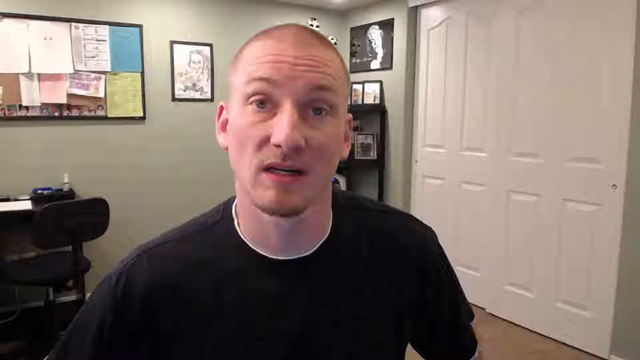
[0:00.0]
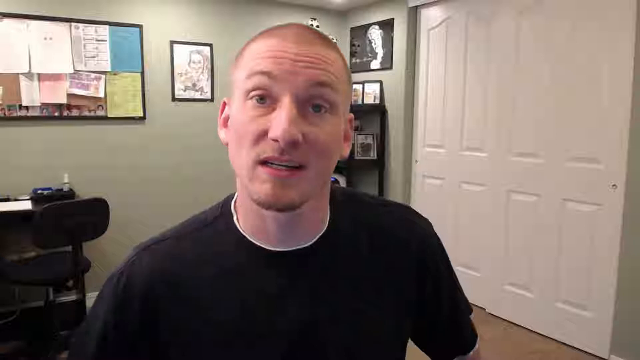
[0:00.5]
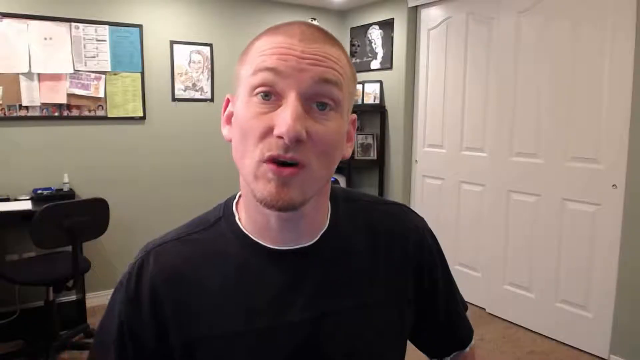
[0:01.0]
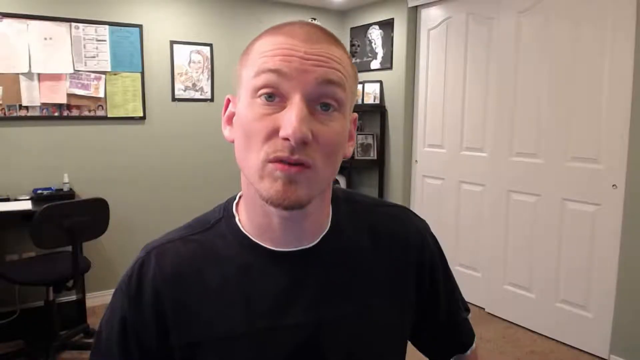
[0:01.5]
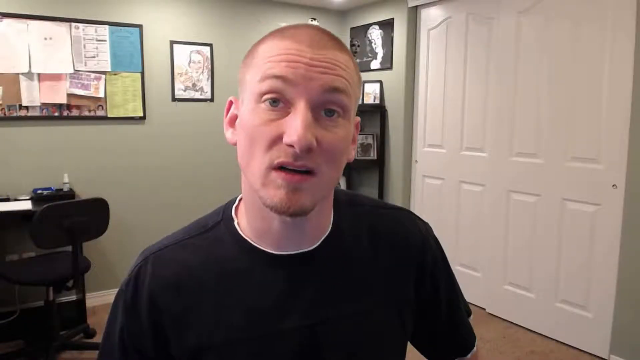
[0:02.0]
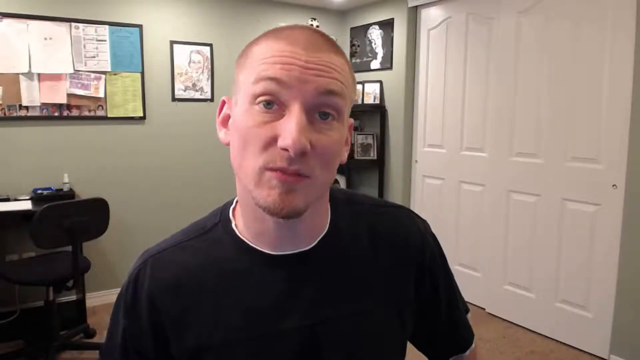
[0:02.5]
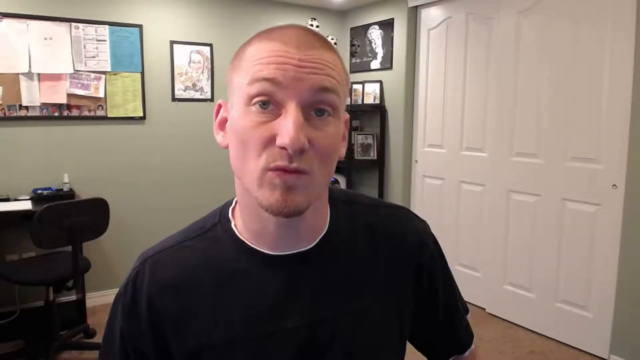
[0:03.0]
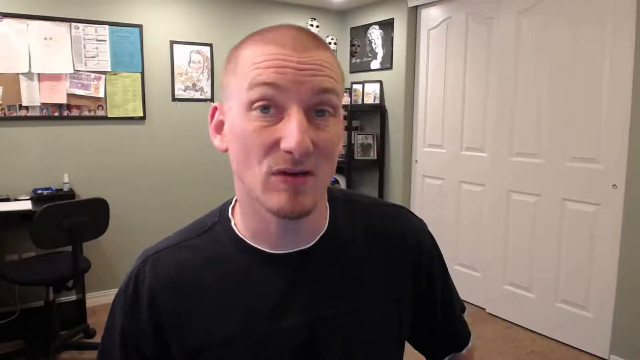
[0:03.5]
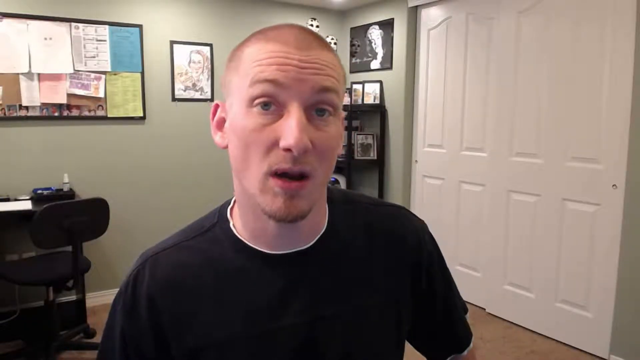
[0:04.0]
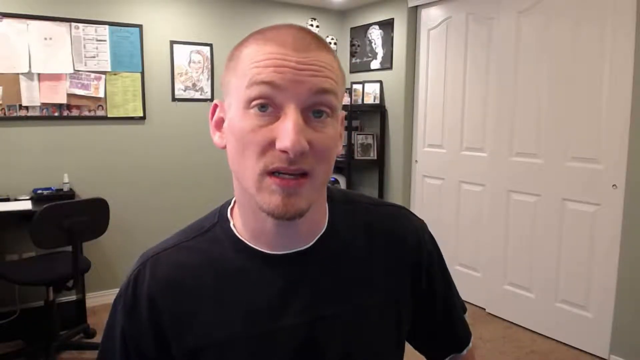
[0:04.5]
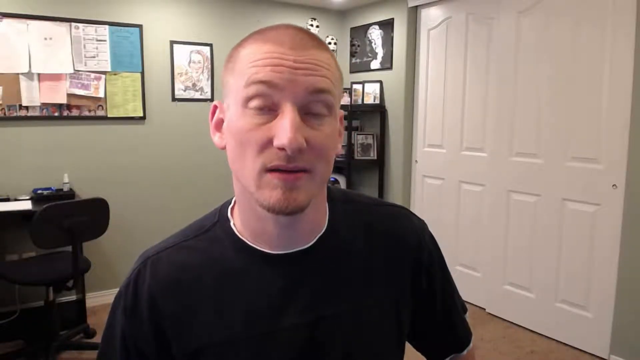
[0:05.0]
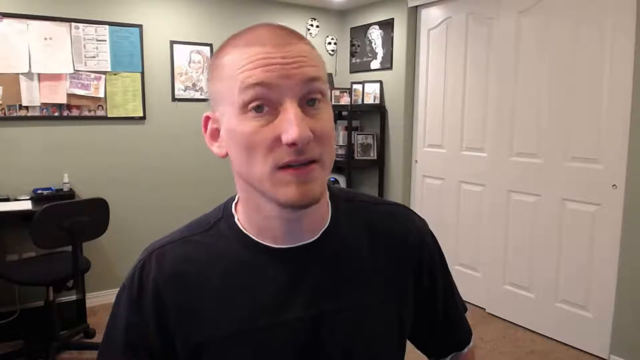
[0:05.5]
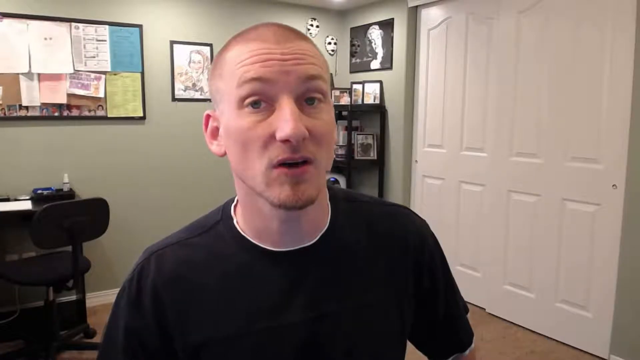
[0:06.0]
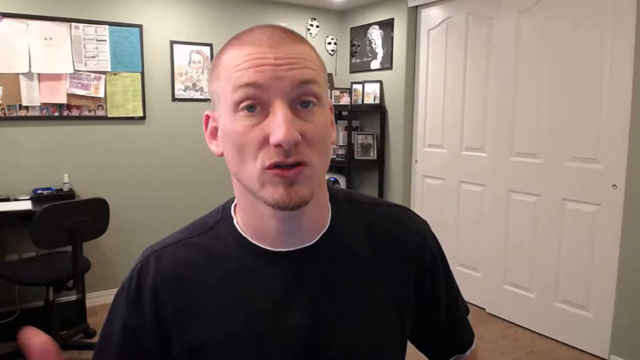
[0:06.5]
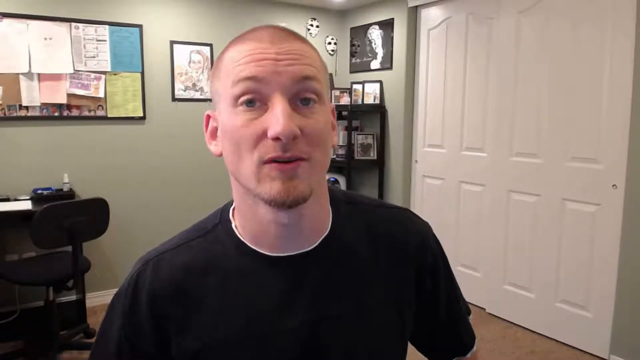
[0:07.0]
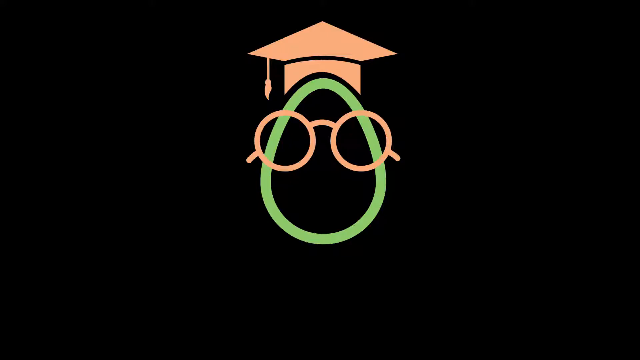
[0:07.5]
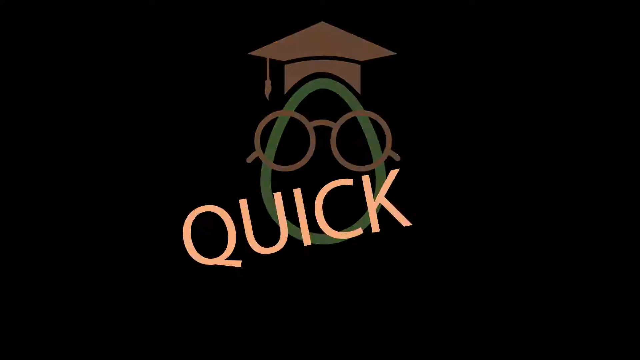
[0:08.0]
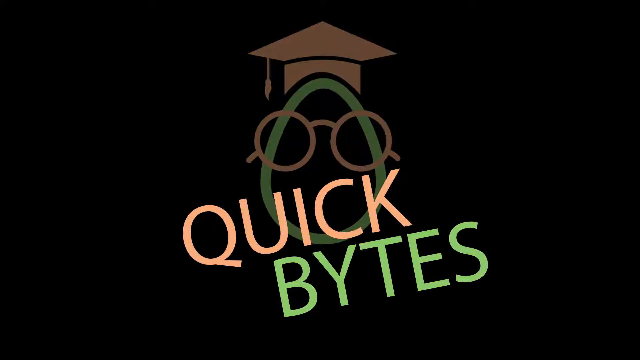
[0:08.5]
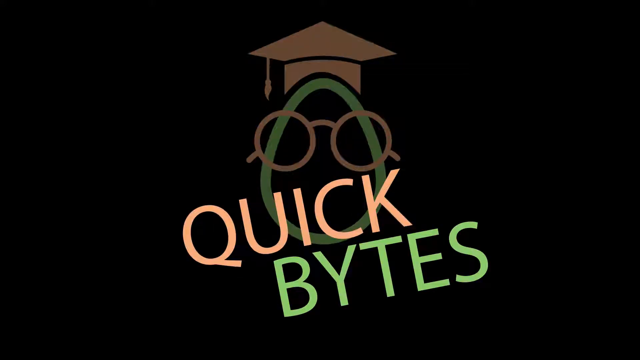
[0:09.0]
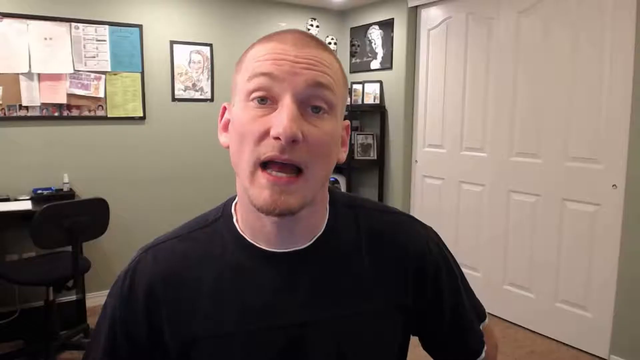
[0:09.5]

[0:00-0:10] A man wearing a black shirt sits in a light green room with white doors behind him, talking directly into the camera. The screen changes to a black background showing a green oval with what looks like glasses and a graduation cap on it, along with the text "Quick Bytes." The video then returns to the man in the black shirt, who speaks directly into the camera; behind him there are pictures on the wall as well as on a stand.